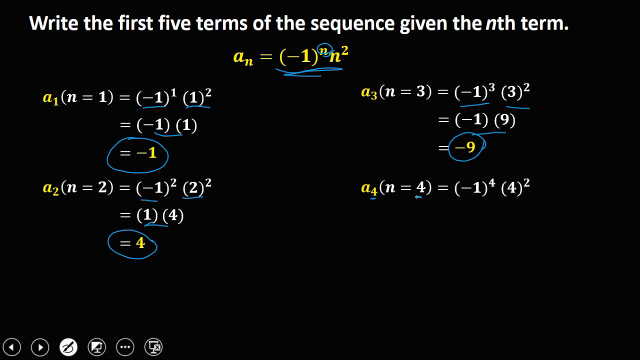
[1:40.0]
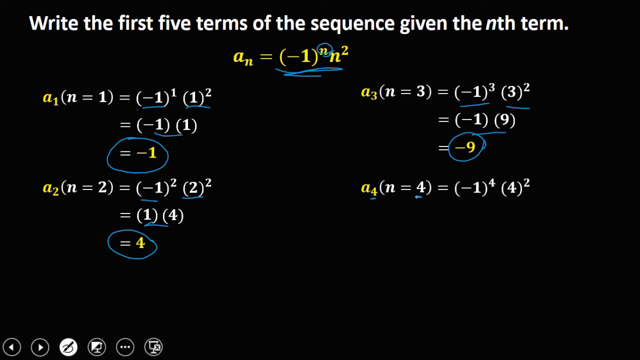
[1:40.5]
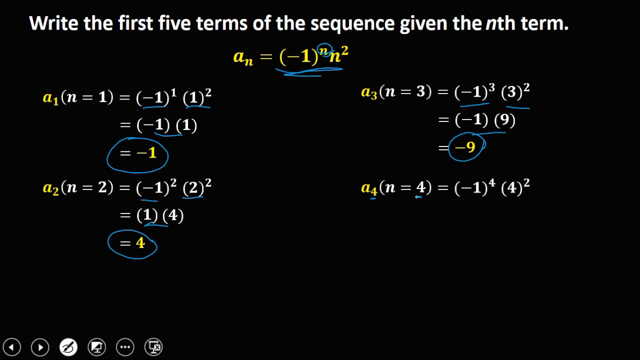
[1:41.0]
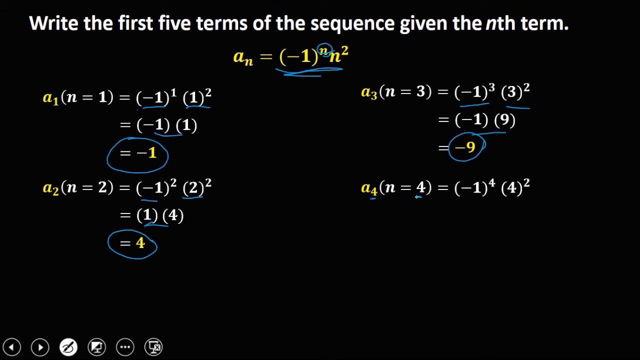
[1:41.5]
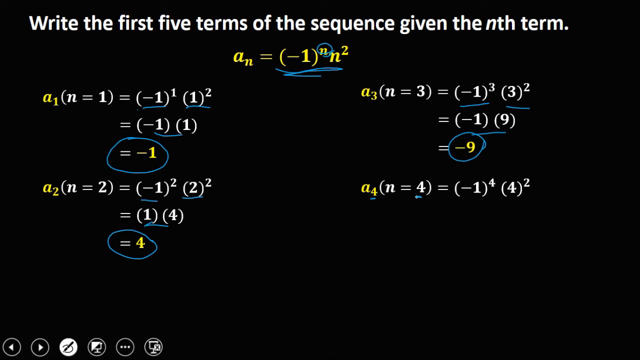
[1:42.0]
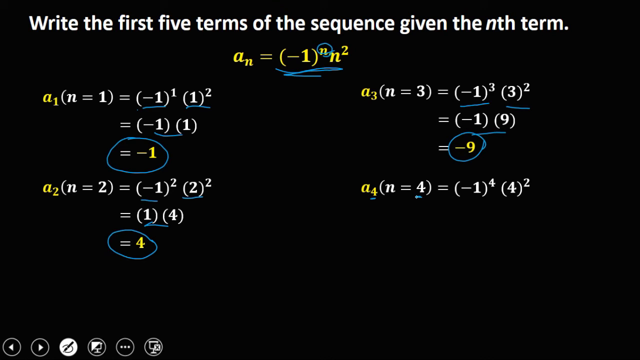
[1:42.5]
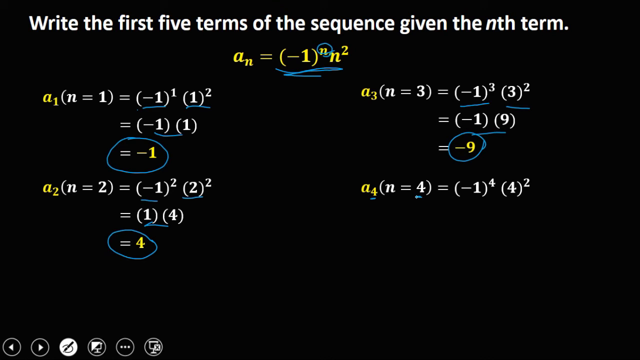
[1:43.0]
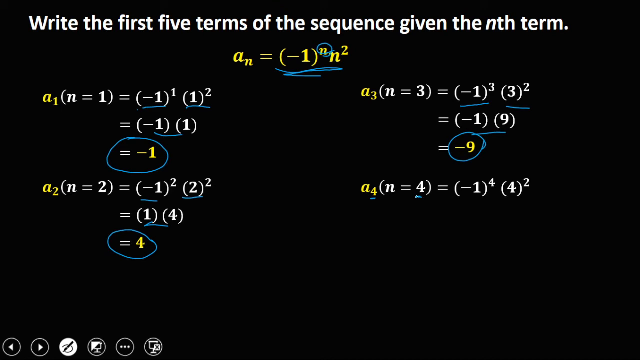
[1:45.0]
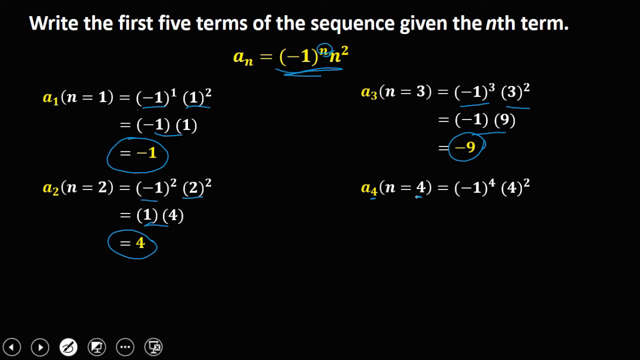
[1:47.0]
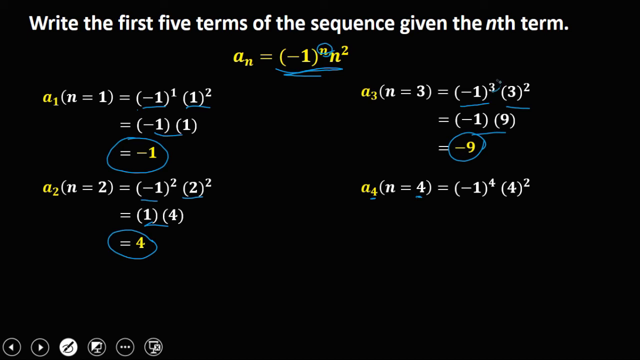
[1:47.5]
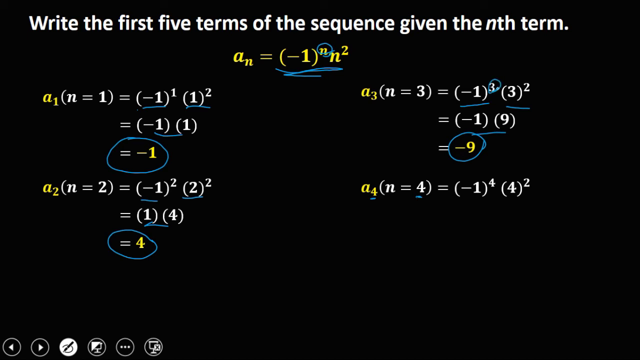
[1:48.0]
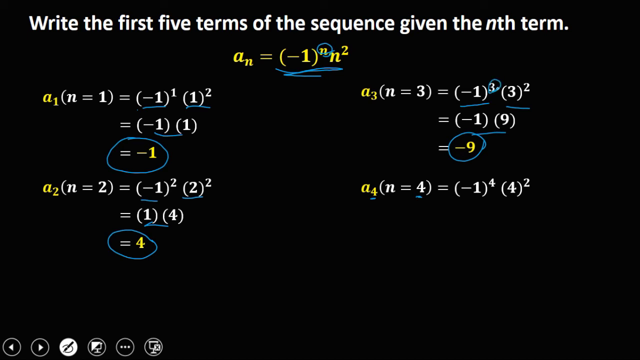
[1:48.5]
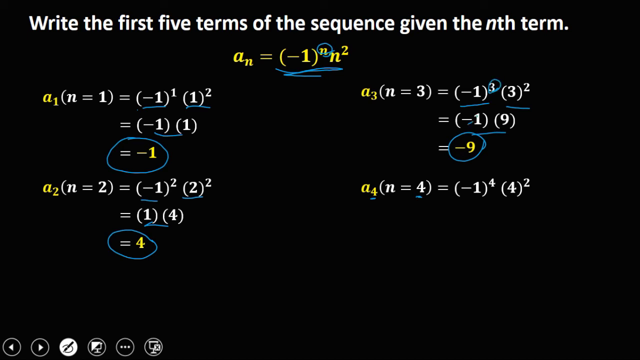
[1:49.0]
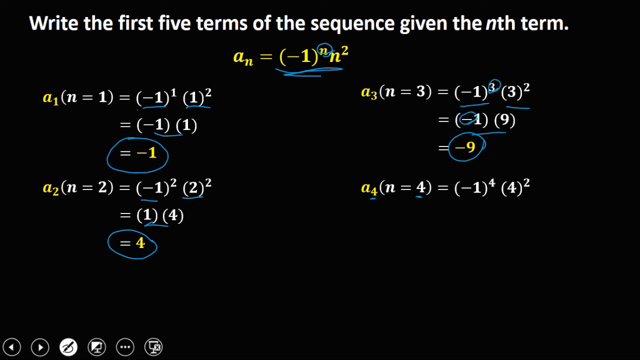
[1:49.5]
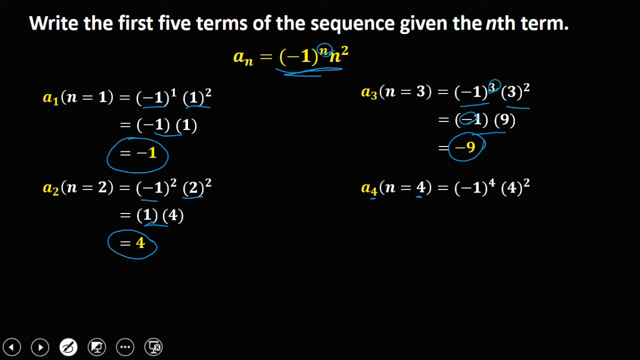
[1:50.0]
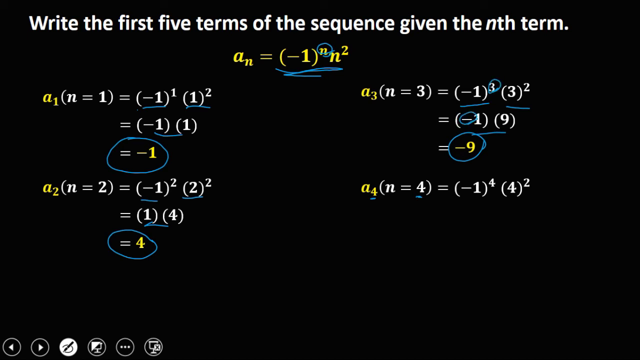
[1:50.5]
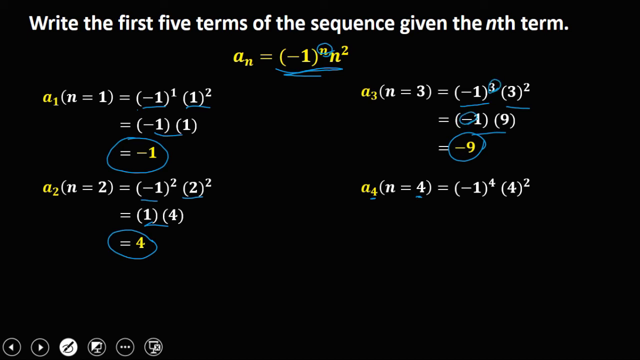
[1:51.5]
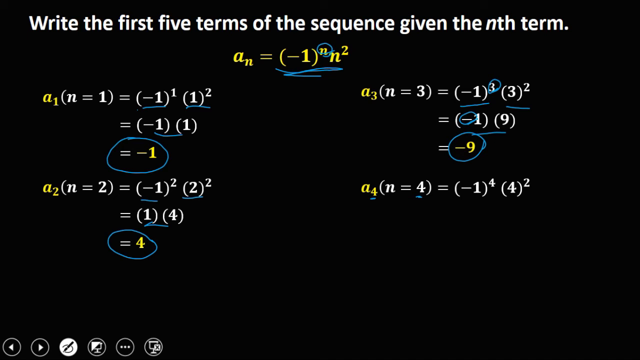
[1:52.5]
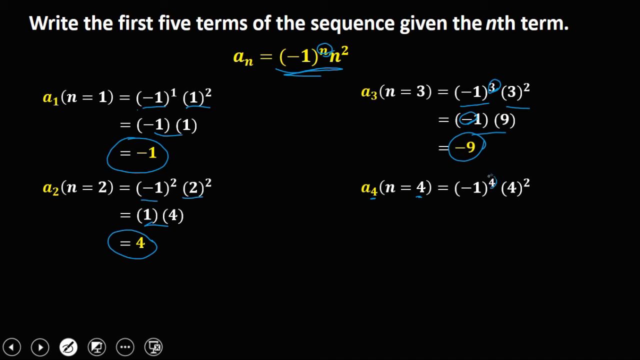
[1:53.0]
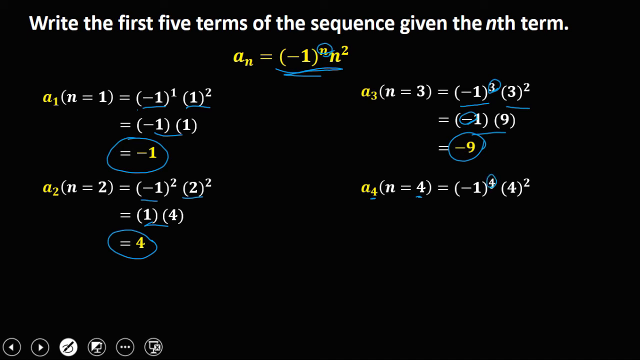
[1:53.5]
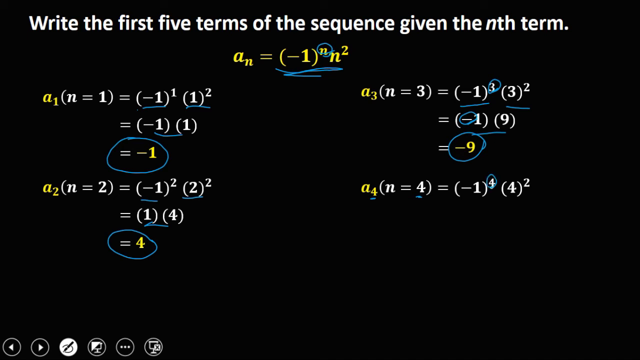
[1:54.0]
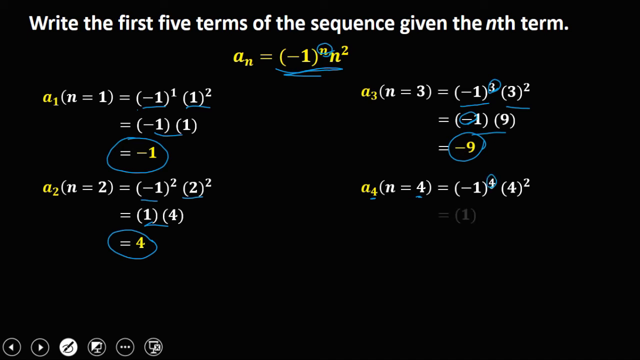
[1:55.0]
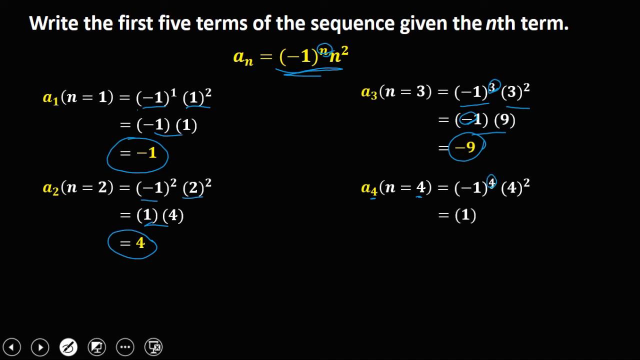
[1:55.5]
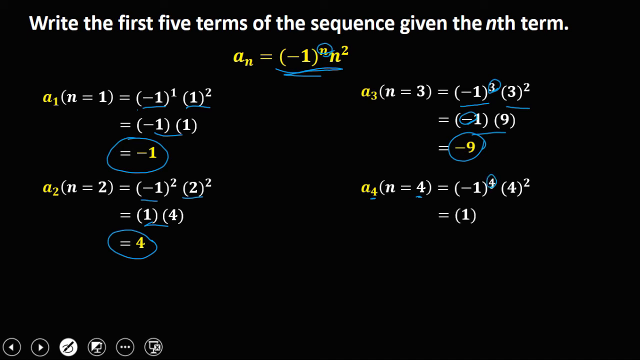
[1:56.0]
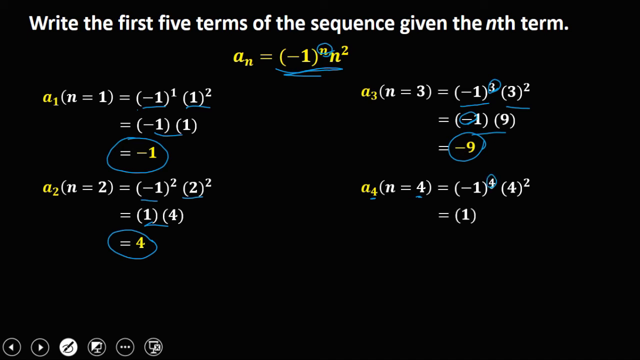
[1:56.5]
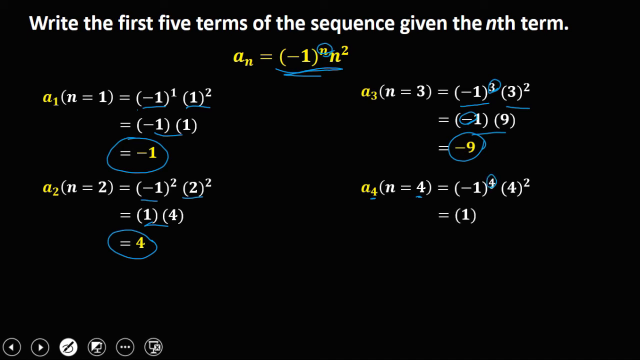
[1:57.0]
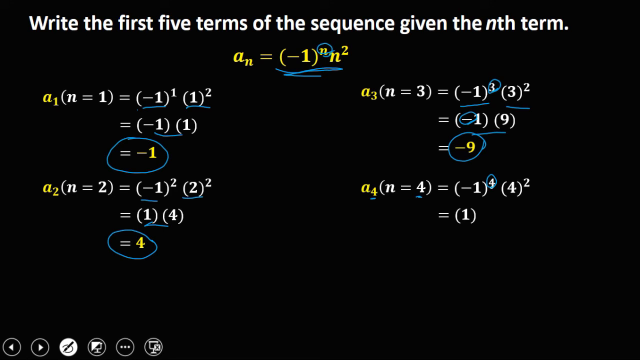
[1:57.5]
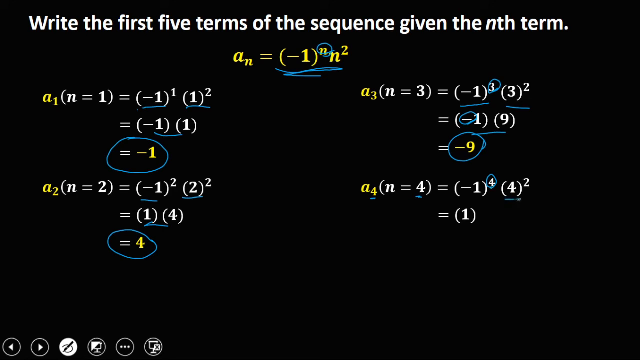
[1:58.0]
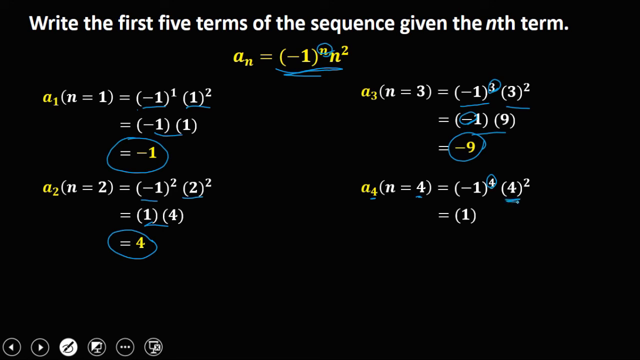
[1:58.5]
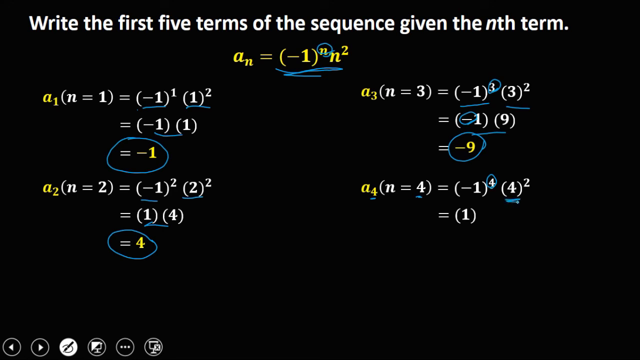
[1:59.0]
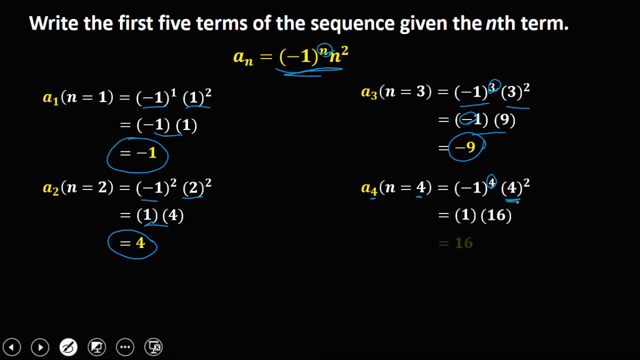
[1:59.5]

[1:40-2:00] The tutorial solves for the fourth term, a subscript 4 (n = 4), which equals negative 1 to the fourth power multiplied by 4 squared. Negative 1 multiplied by itself four times, an even number of times, is positive 1, and 4 squared is 16, so 1 multiplied by 16 gives the answer 16.